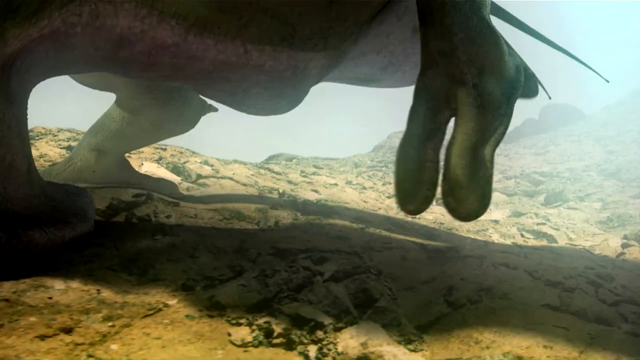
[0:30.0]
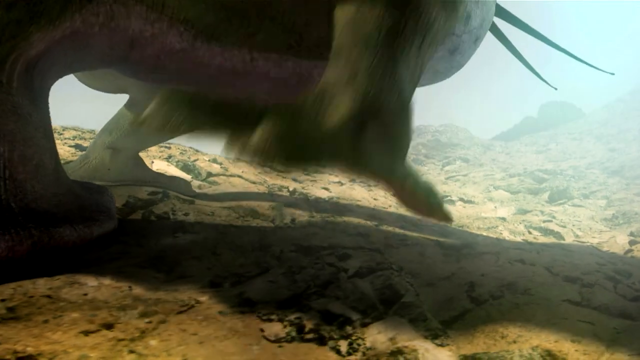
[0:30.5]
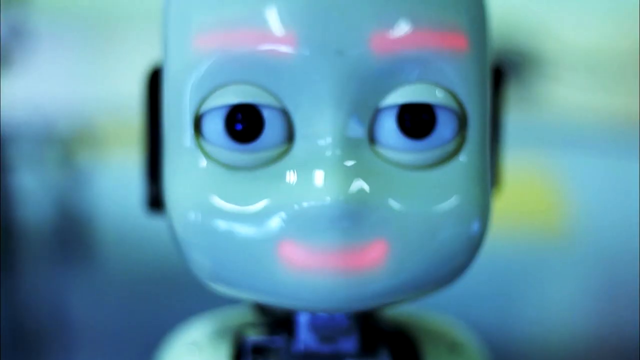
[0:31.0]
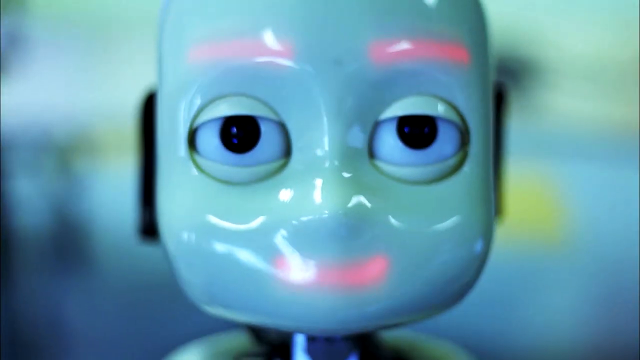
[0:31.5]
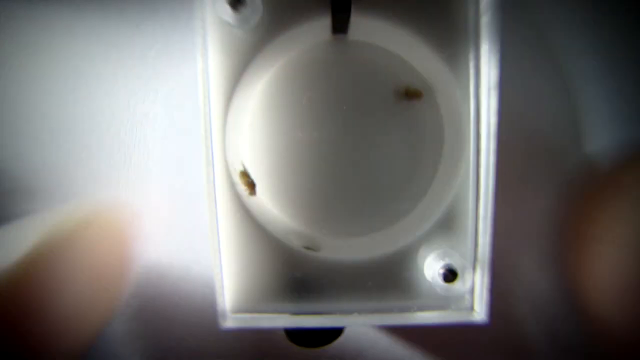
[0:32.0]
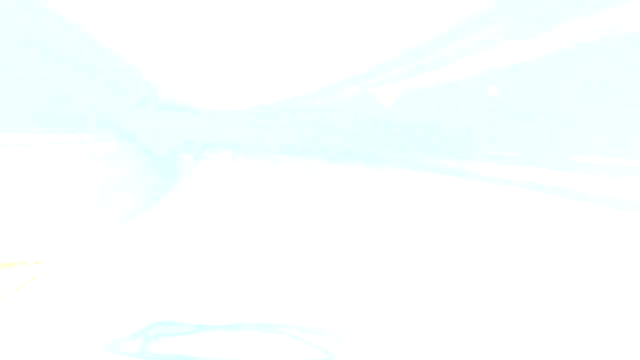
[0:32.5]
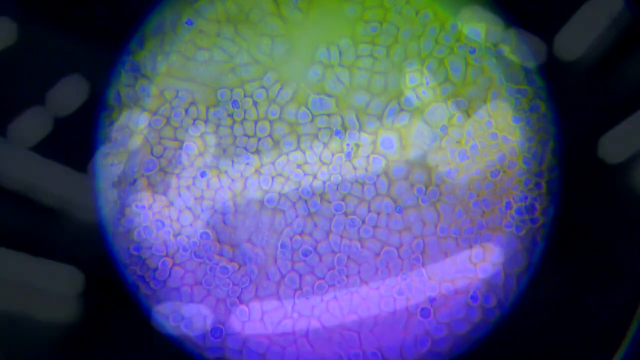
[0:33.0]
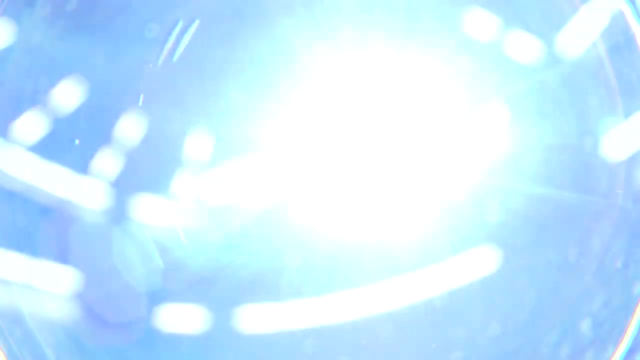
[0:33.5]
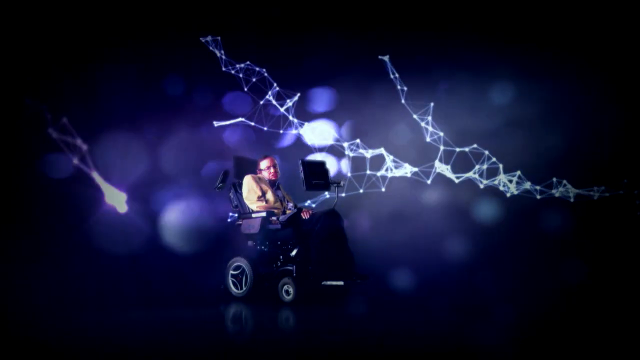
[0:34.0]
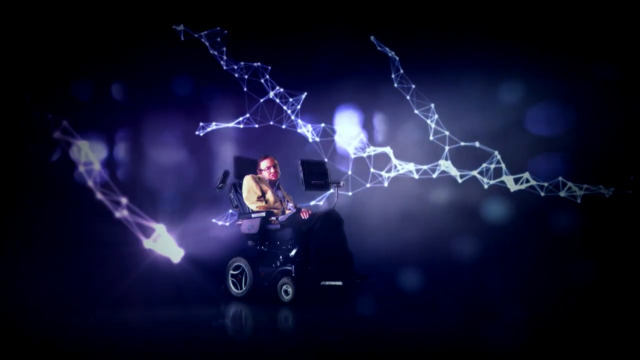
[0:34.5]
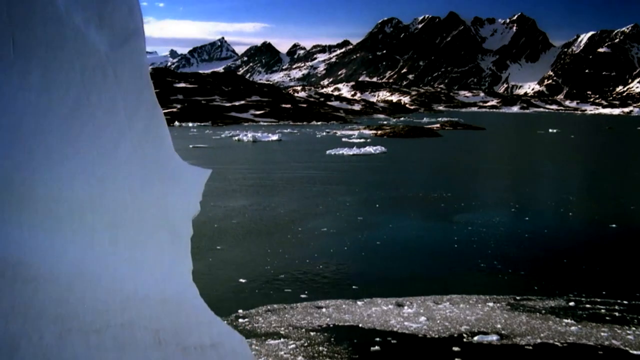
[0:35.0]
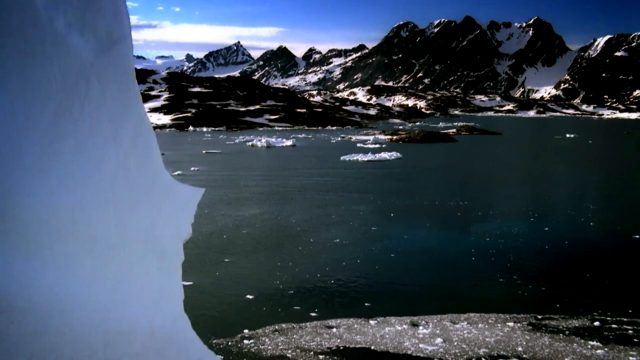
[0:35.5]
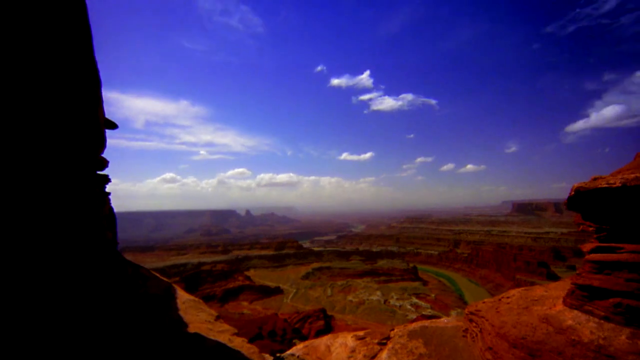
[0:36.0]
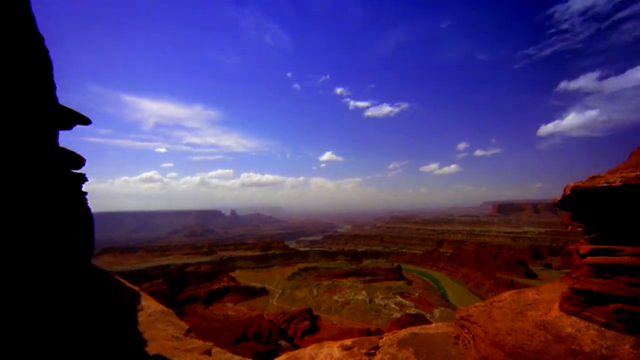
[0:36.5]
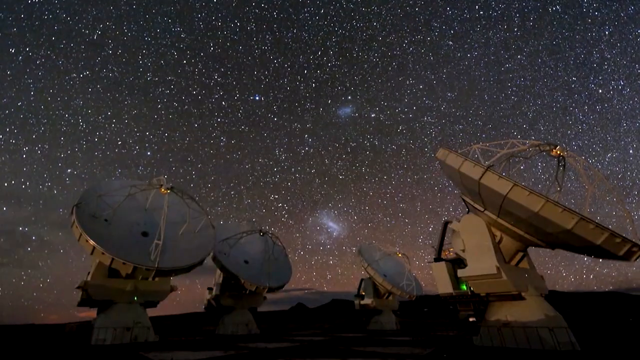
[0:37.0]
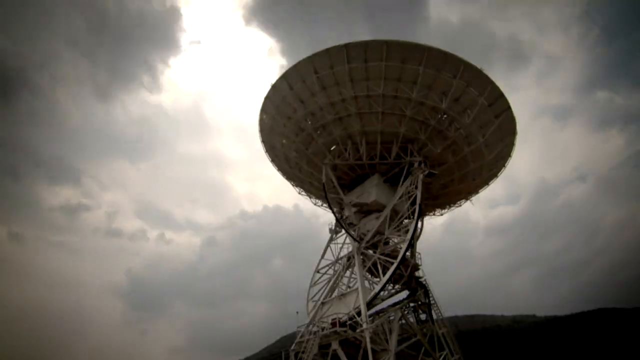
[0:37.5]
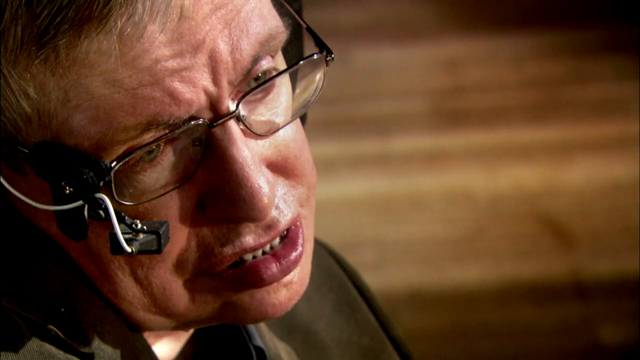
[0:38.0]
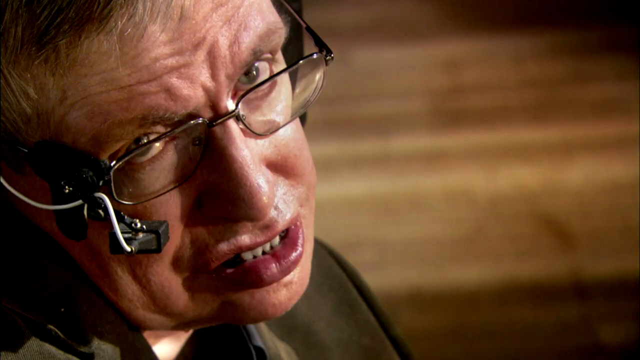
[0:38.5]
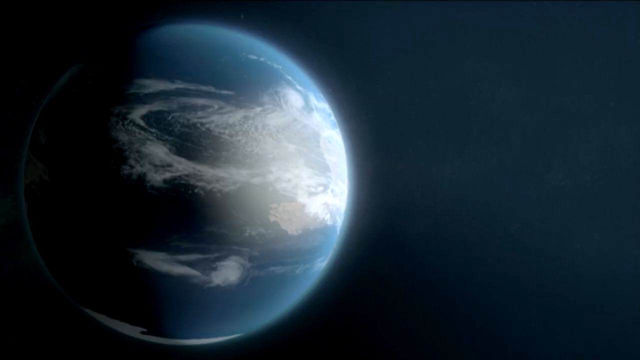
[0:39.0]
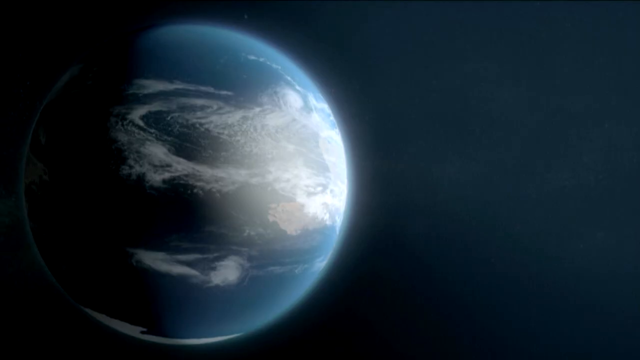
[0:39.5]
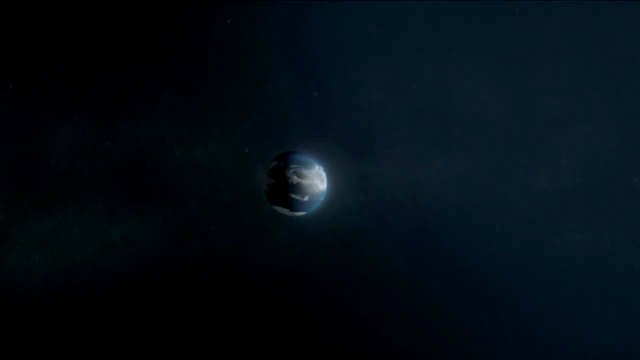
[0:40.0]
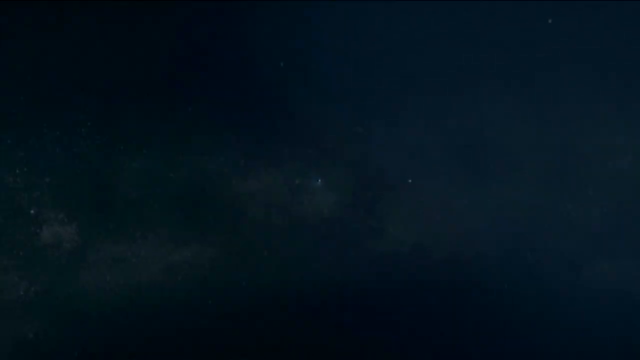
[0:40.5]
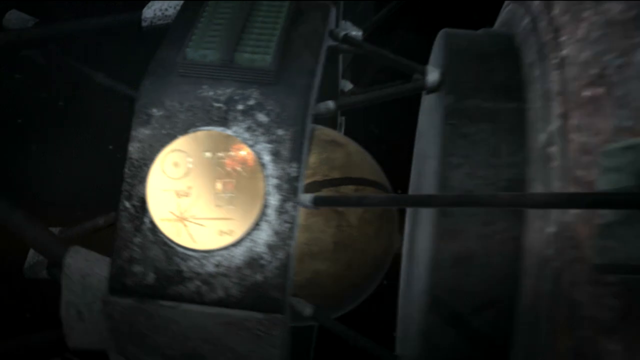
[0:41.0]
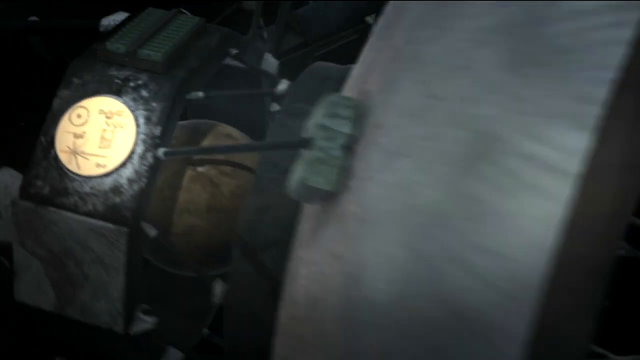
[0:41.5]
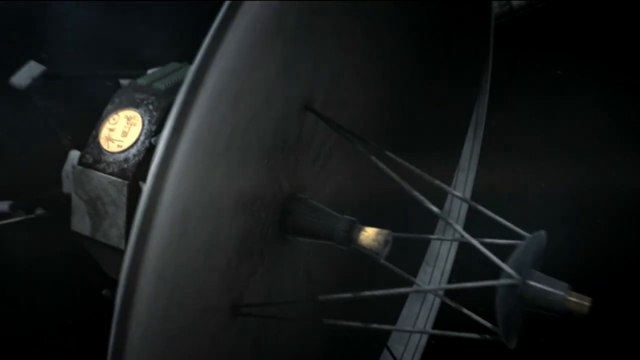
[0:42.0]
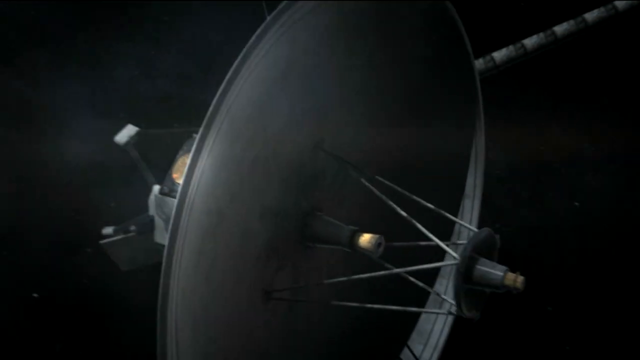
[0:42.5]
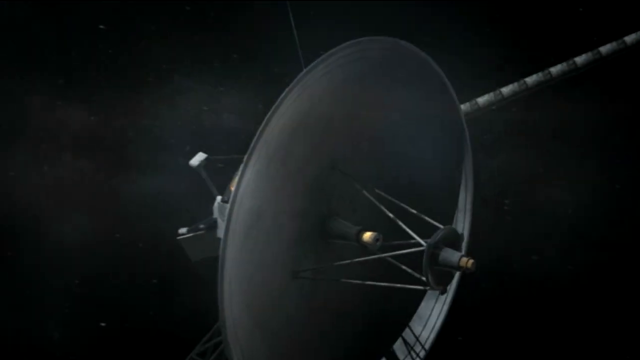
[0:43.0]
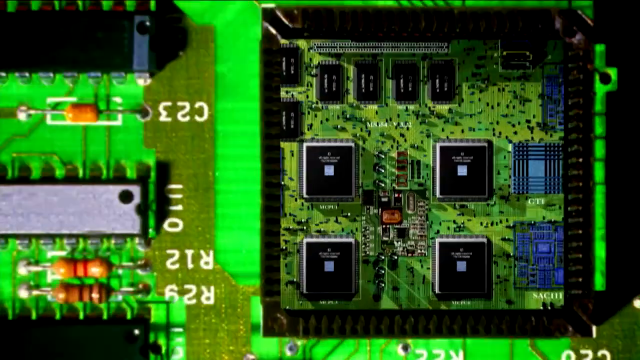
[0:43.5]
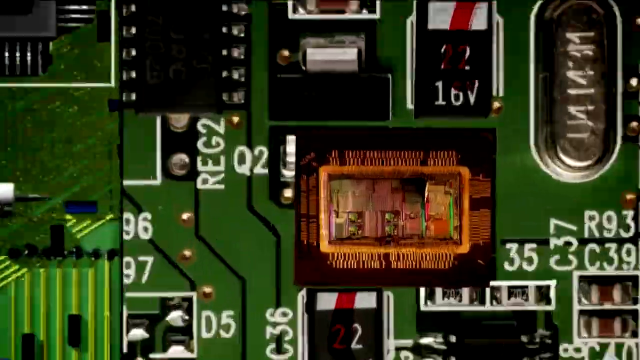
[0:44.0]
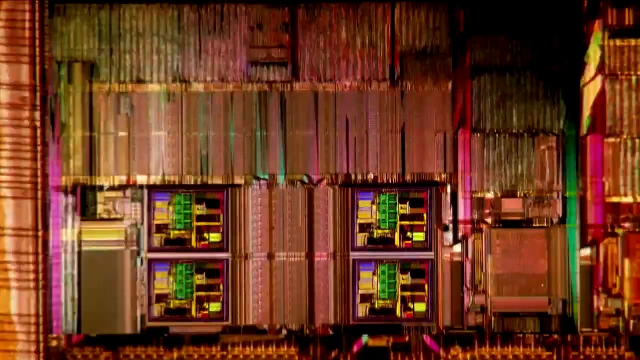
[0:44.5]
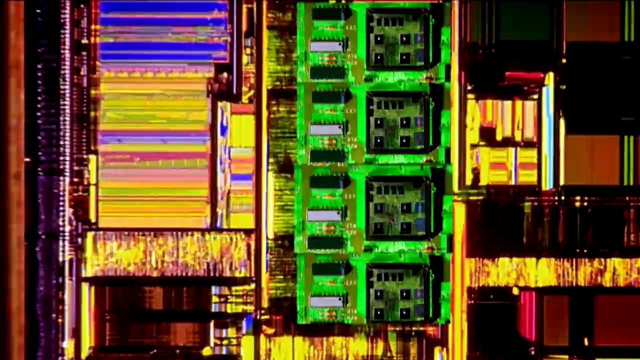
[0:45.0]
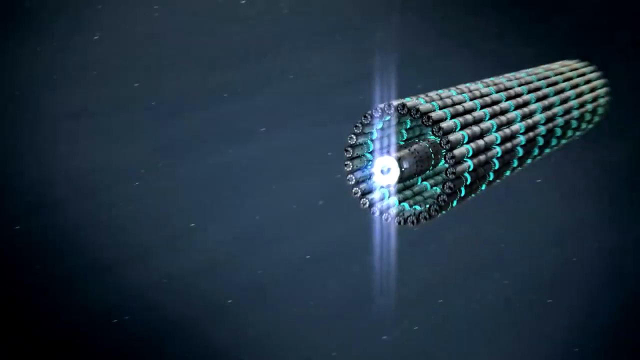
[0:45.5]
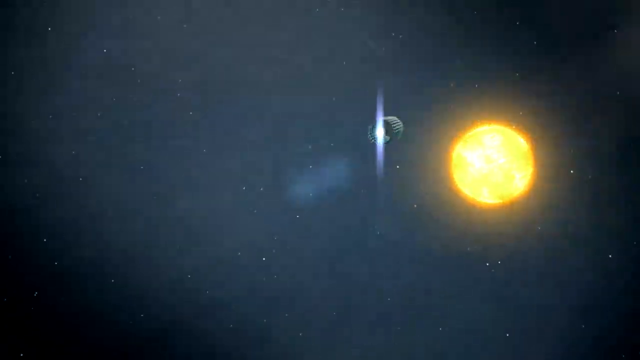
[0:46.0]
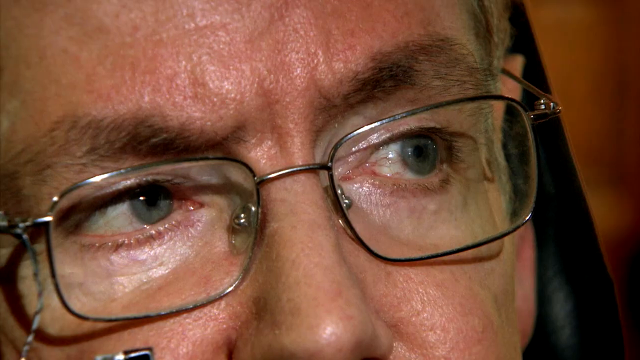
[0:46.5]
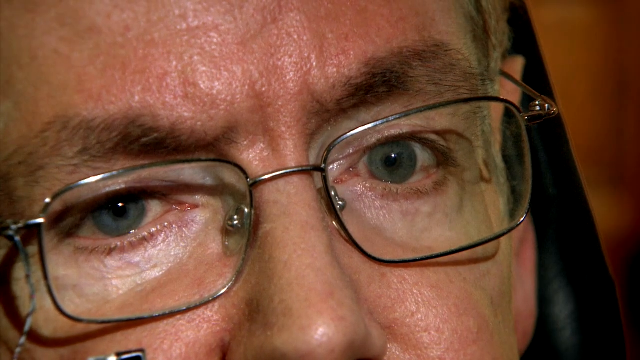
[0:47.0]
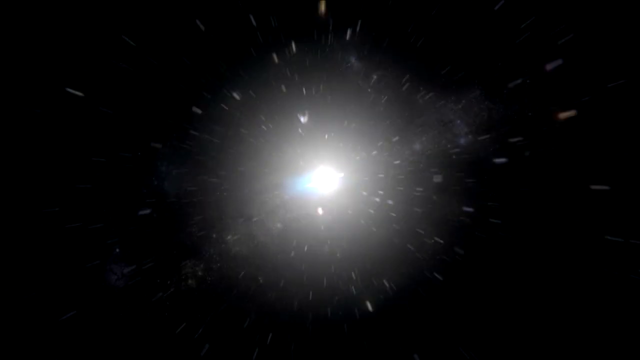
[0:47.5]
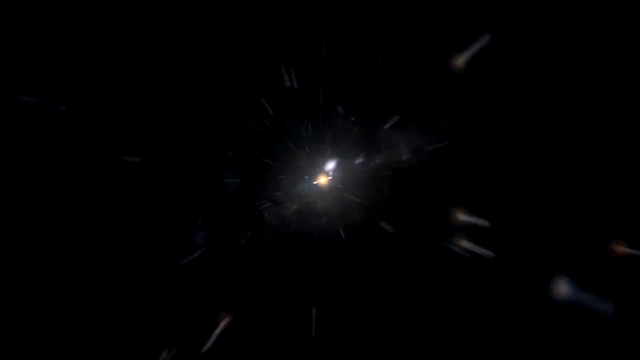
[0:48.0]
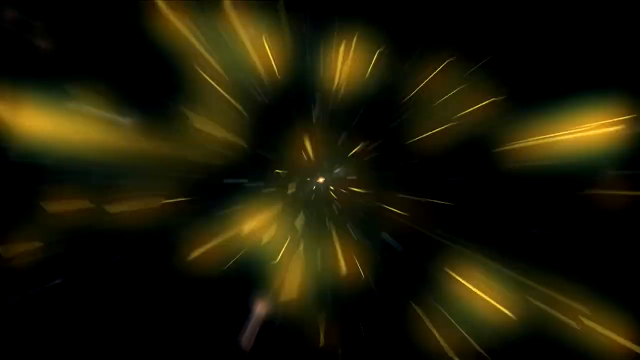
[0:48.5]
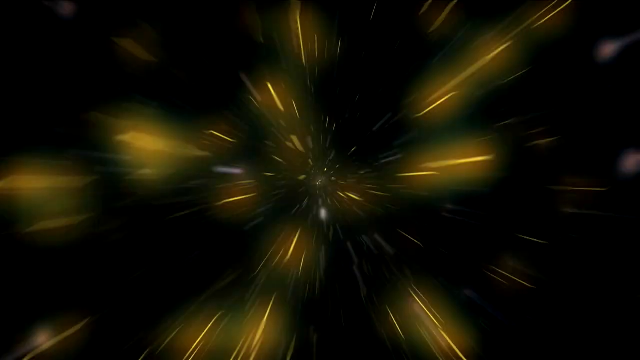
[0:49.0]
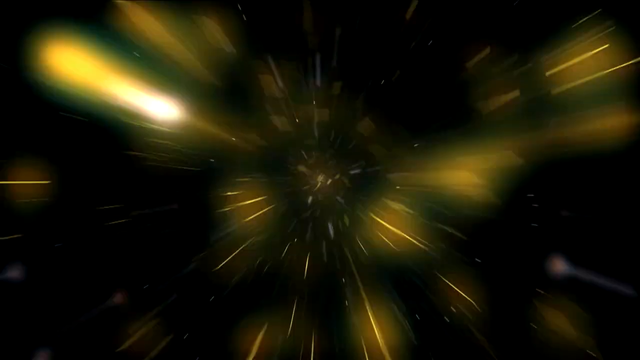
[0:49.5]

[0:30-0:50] The alien's feet are in full view as it walks. The video cuts to footage of a robot with a face and expressive eyes looking at the camera, then to scenes of microbiology under an infrared scope showing the different lives swirling inside. It immediately transitions to a bright white light, and then to an info-based graphical design layout of Stephen Hawking sitting in his chair with his terminal monitor before him and DNA strands reaching out. Next comes Icelandic, northern European footage of snowy mountainsides, followed by America's Grand Canyon with its red rock formations. Several cuts show the mountainside with massive satellite arrays tilting towards the sky and moving to track meteorological data. The video then cuts to Stephen Hawking looking at the camera.